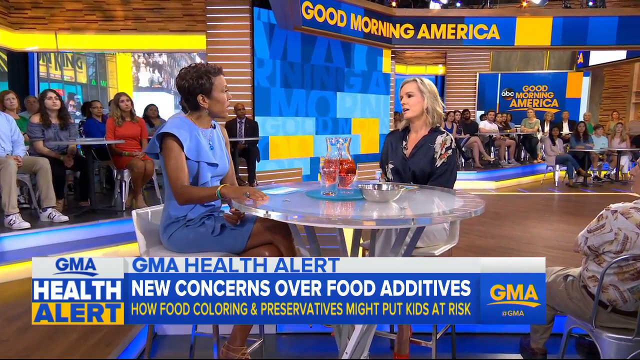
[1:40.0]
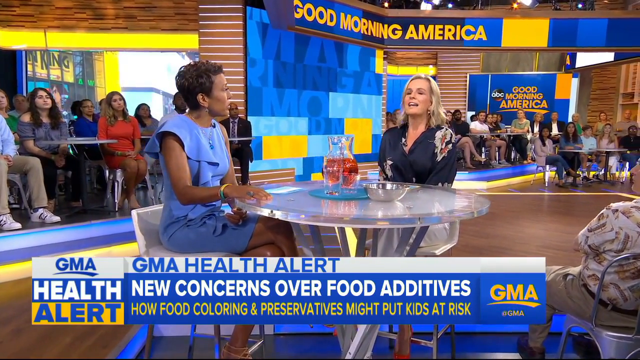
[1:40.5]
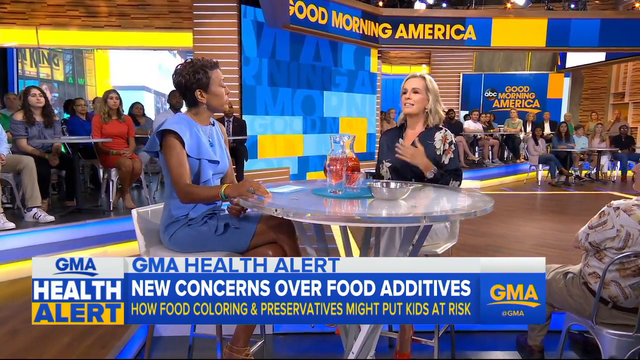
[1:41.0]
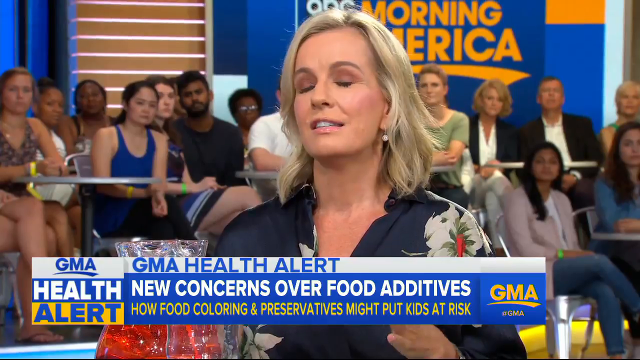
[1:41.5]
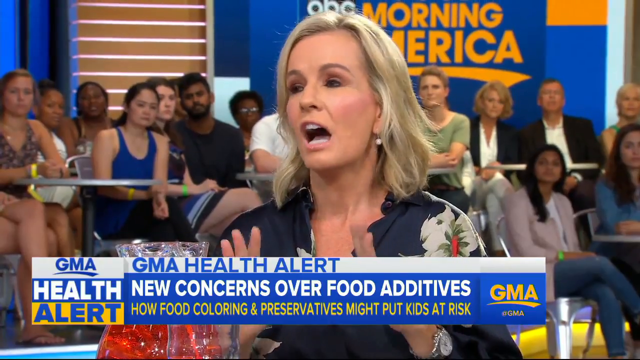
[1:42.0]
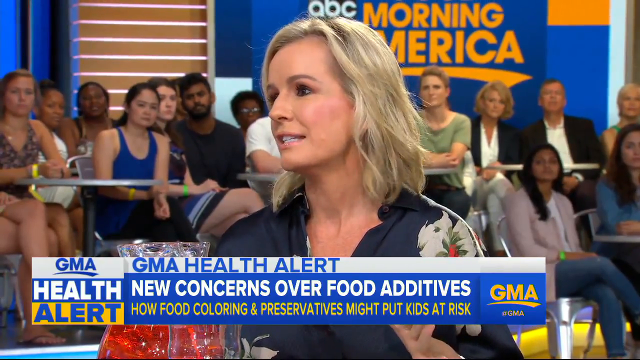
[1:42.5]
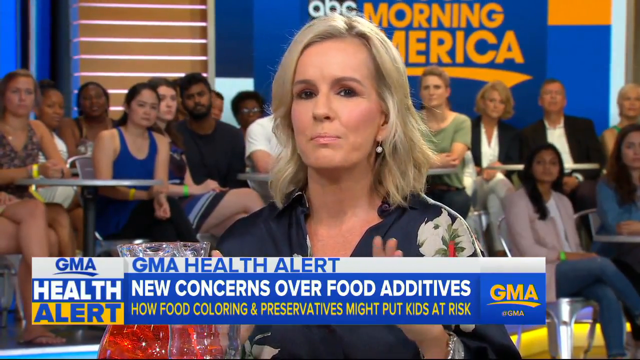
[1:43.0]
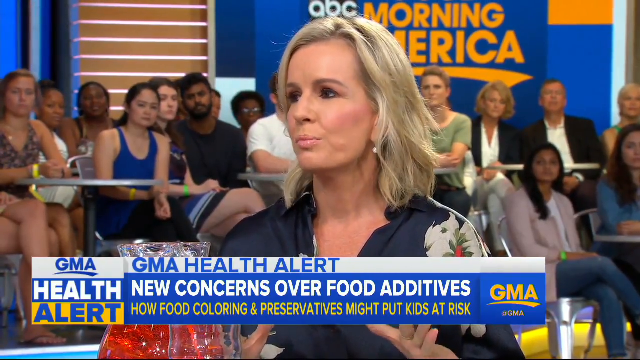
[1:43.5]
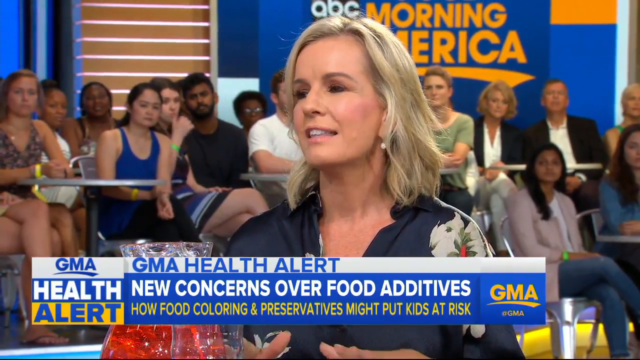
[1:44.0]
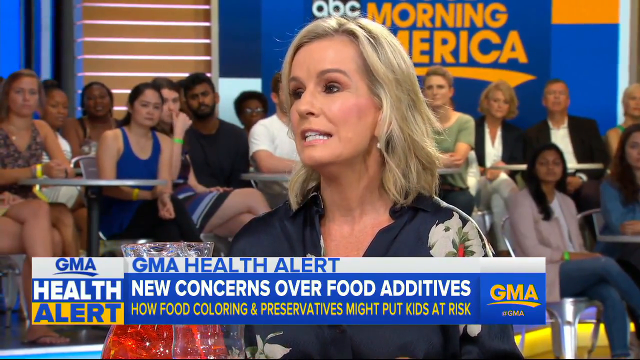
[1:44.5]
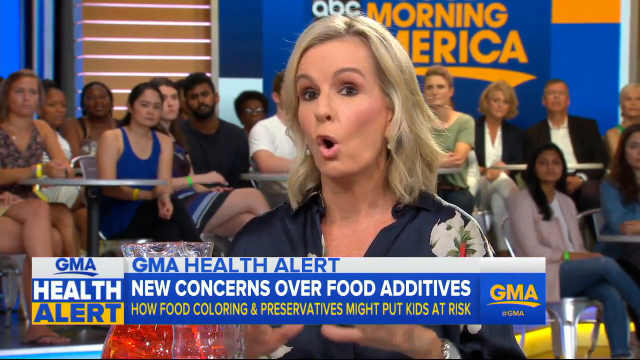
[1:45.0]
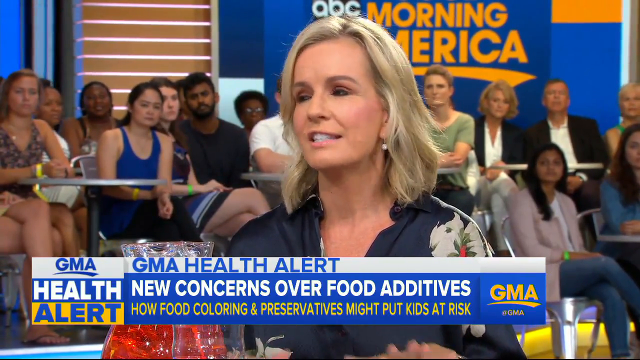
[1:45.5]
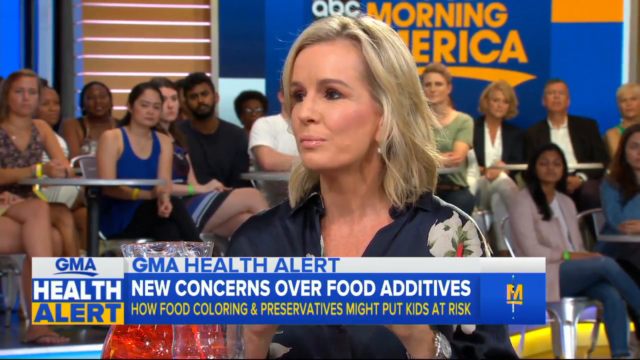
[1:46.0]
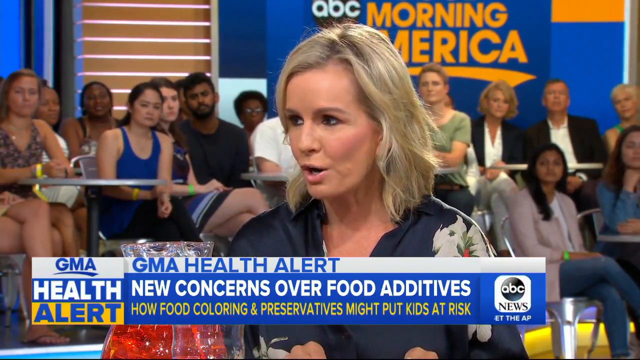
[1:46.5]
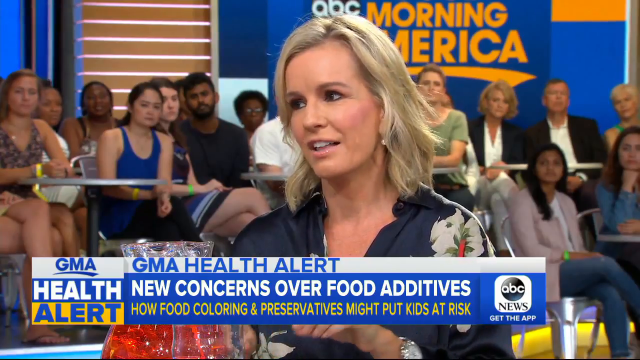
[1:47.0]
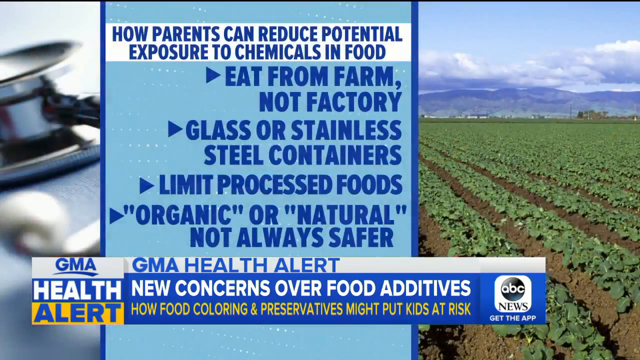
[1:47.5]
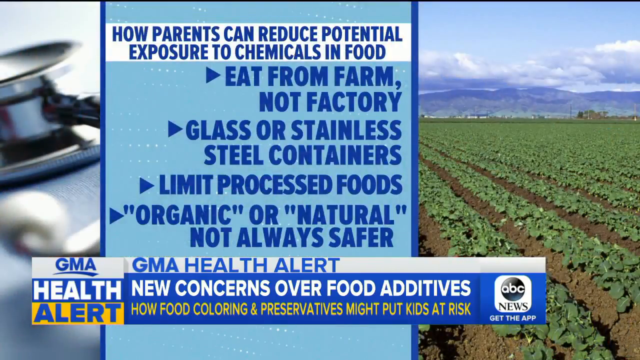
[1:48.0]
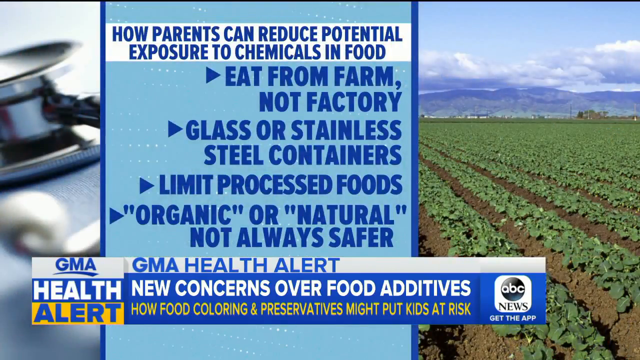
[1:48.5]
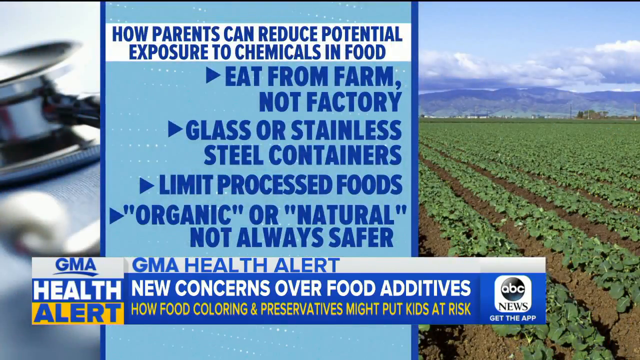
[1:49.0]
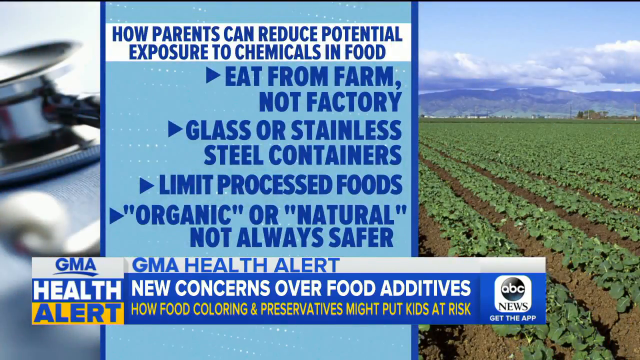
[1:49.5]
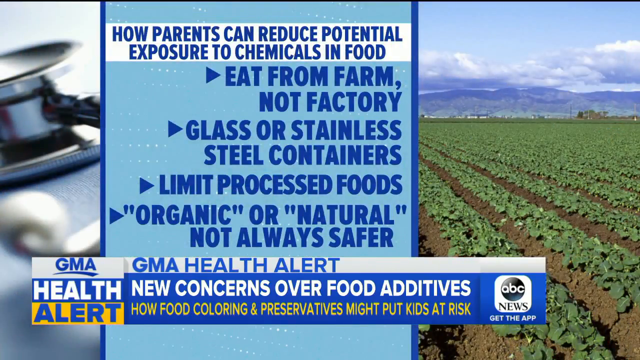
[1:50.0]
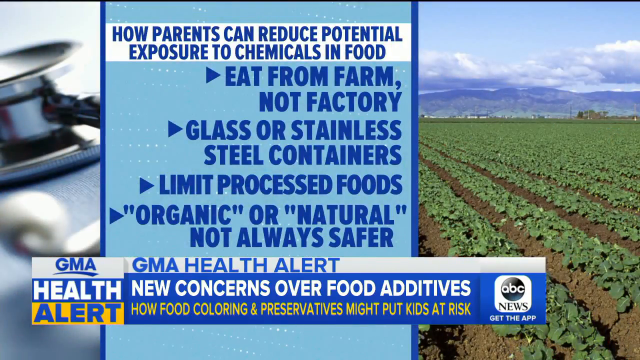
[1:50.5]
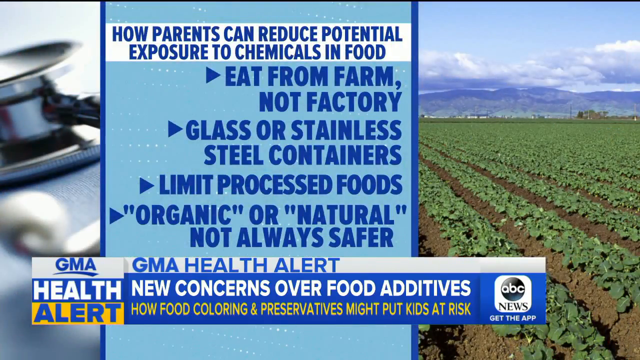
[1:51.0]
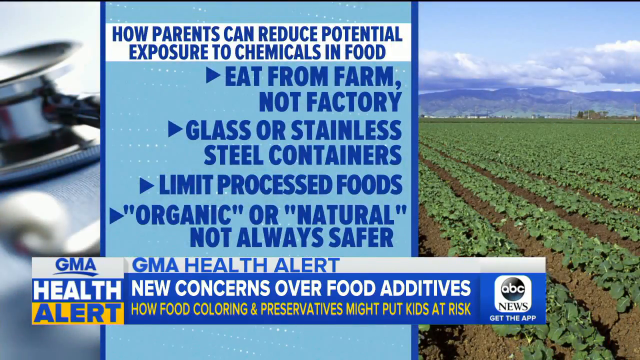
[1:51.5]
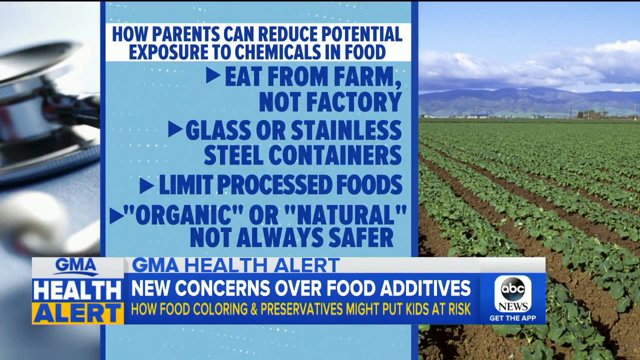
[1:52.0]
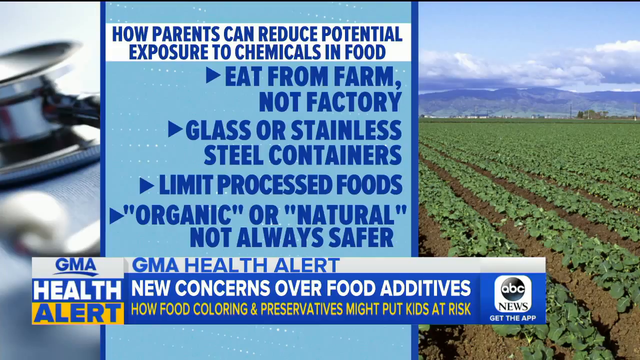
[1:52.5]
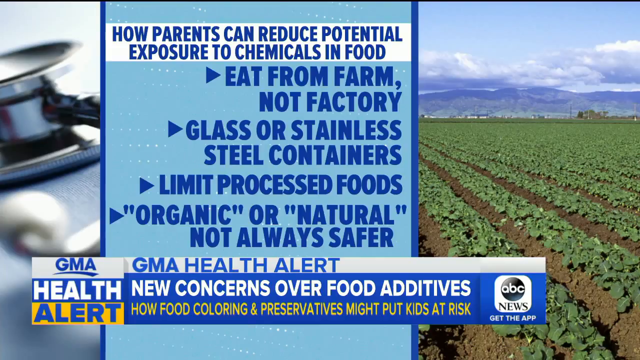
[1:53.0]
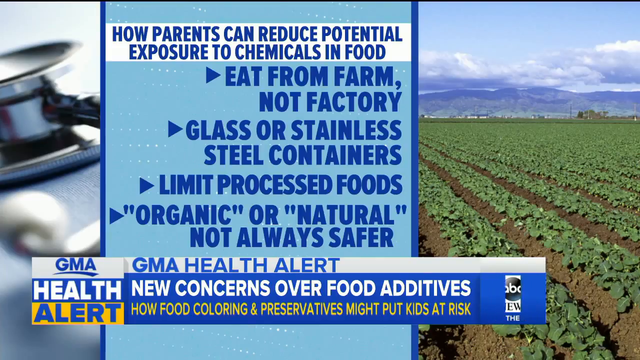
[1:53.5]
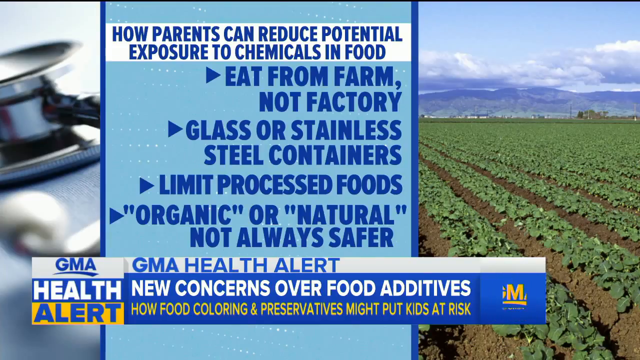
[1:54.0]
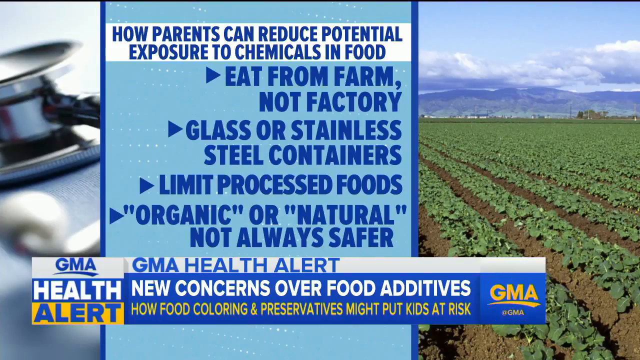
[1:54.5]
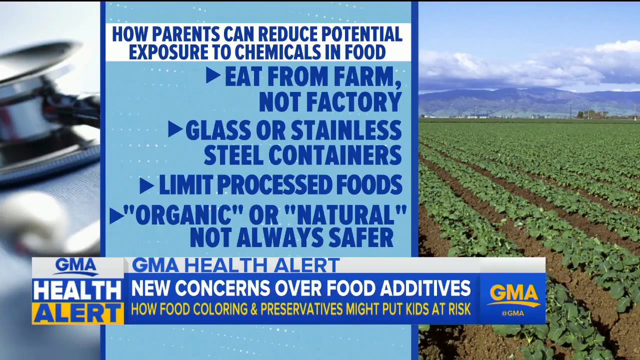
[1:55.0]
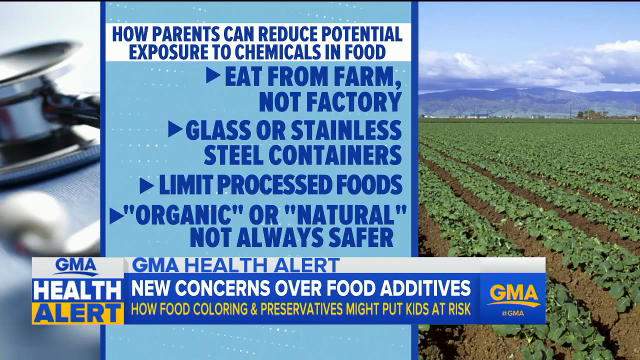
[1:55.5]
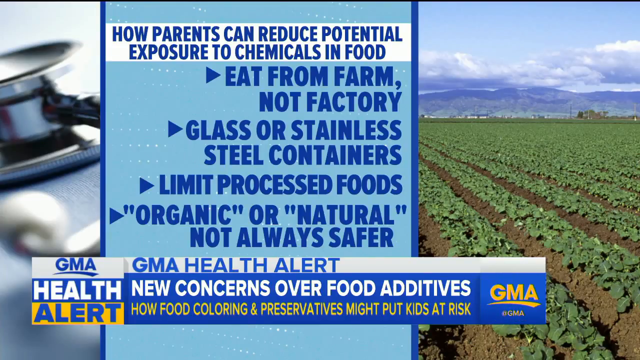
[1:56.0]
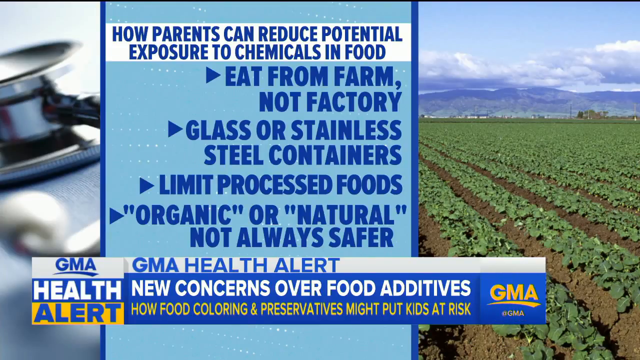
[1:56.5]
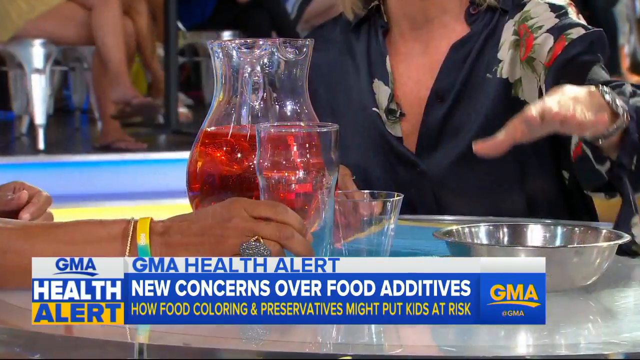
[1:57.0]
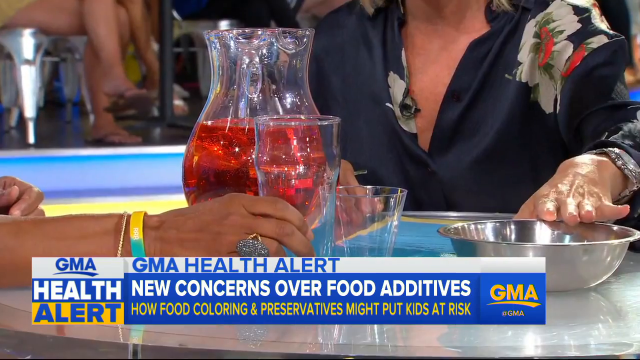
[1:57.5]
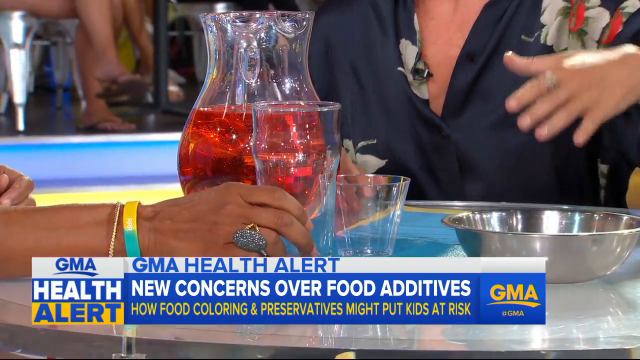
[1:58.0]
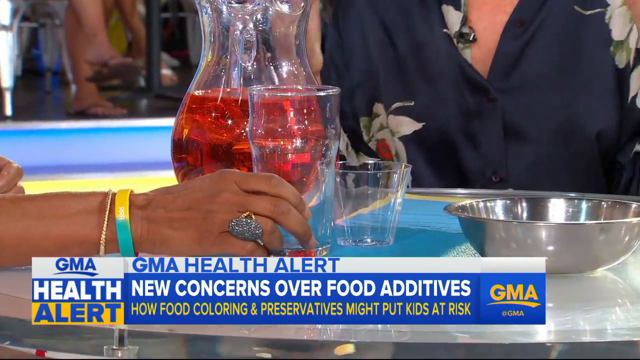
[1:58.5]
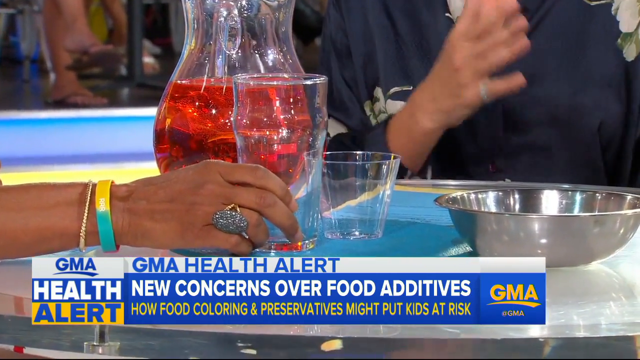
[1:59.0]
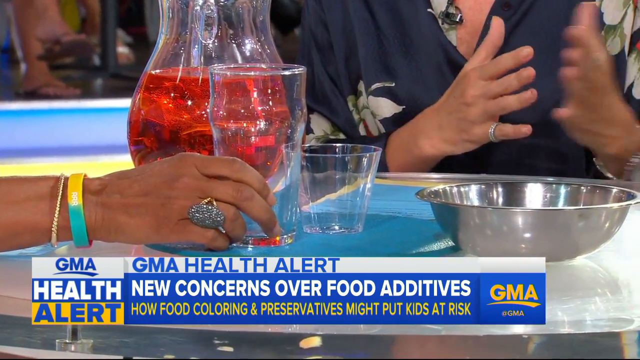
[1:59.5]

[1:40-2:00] The two women are sat in the studio. The blonde-haired woman talks animatedly, moving her arms around quite a lot. The video cuts to an image that again seems to have a blurred stethoscope on the left-hand side. On the right-hand side is a picture of a mountainous region with blue skies and low clouds around the tops of the mountains, and rows of cultivated farmland with ridges of brown soil and a green plant growing in rows throughout the vast field, which is flat in contrast to the mountains behind it. Text in the middle of the blue box reads "how parents can reduce potential exposure to chemicals and food", followed by "eat from farm not factory", "glass or stainless steel containers", "limit processed foods" and "organic or natural is not always safer". The GMA Health Alert sign is still at the bottom. The video then cuts back to the studio with a close-up of the table the two women are sat at. A silver bowl is clearly visible on the right-hand side. The black woman is holding an empty pint glass; there is a small glass behind it and the glass jug of pinky red liquid is behind the pint glass. The woman has a large ring on her right ring finger and wears a yellow and blue band plus a thin gold chain around her wrist.